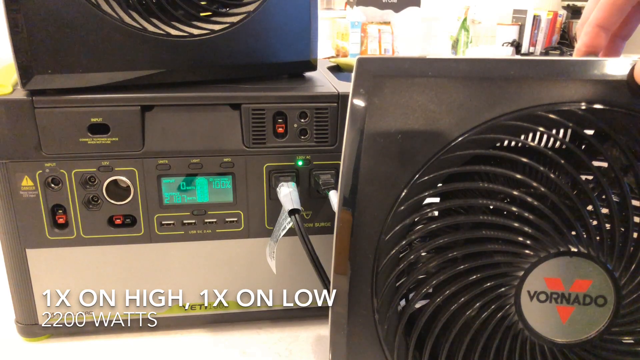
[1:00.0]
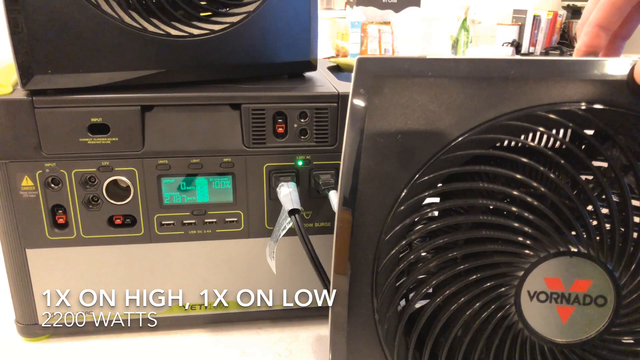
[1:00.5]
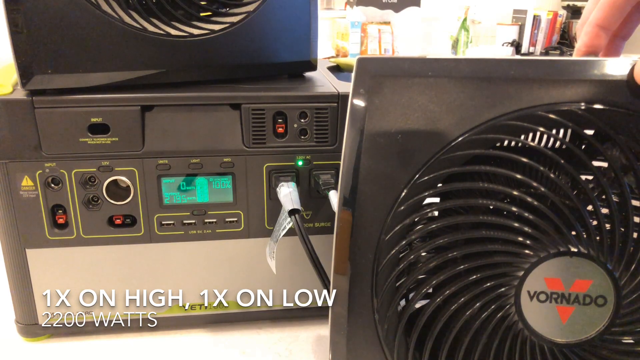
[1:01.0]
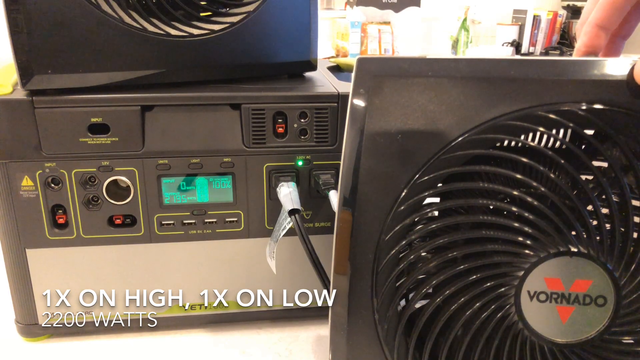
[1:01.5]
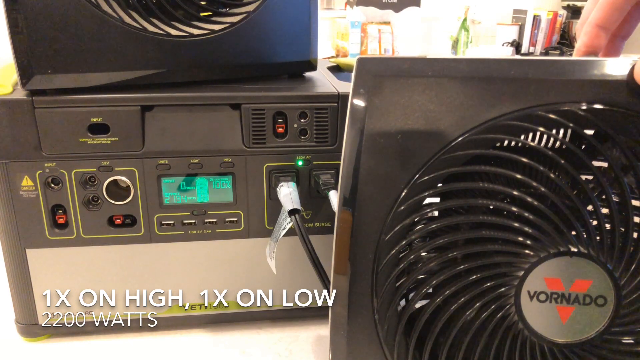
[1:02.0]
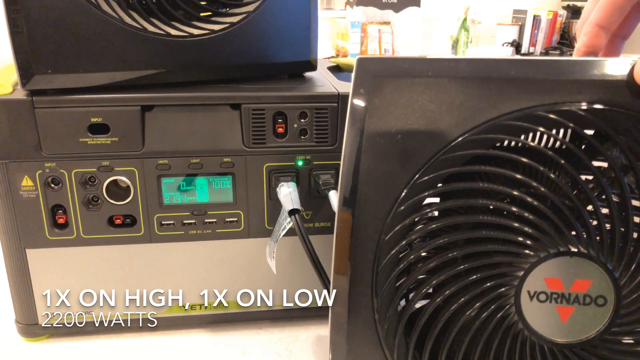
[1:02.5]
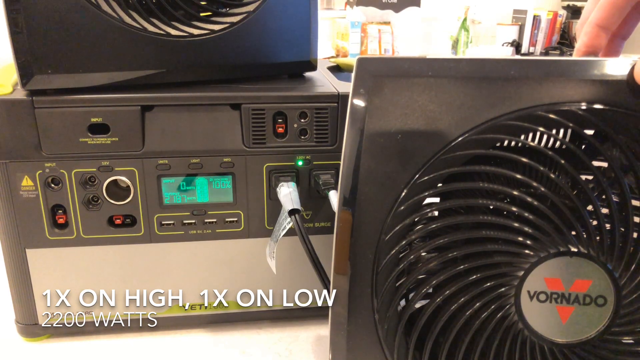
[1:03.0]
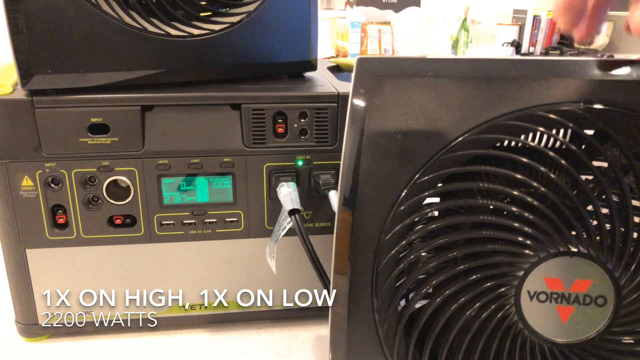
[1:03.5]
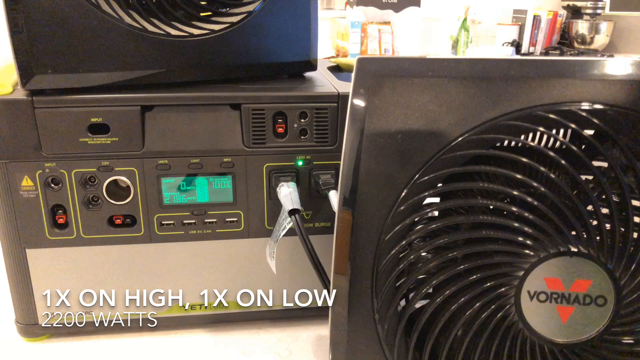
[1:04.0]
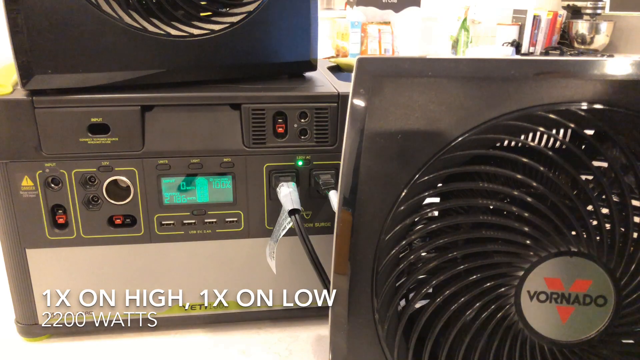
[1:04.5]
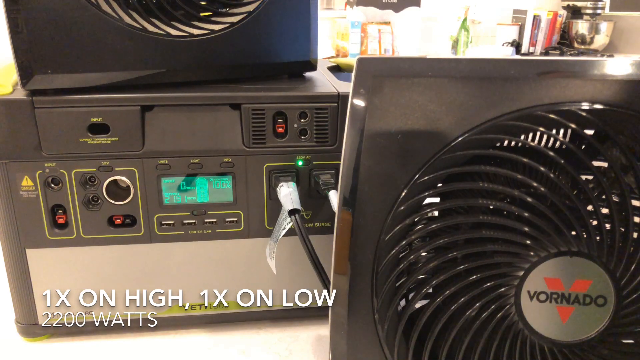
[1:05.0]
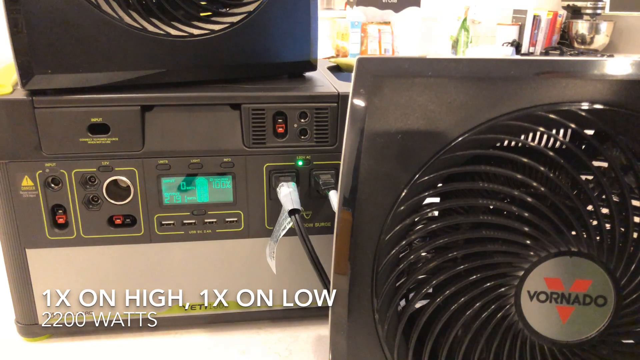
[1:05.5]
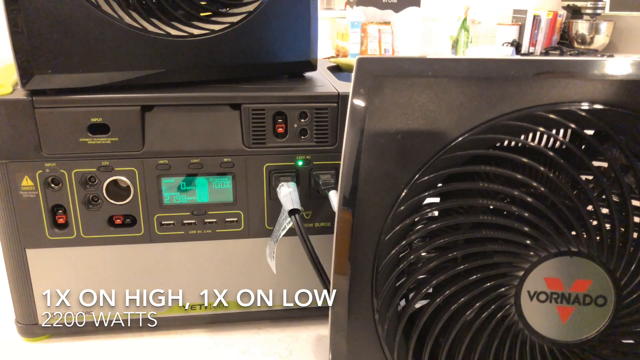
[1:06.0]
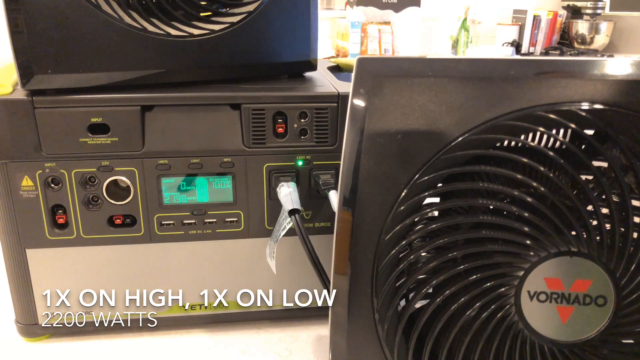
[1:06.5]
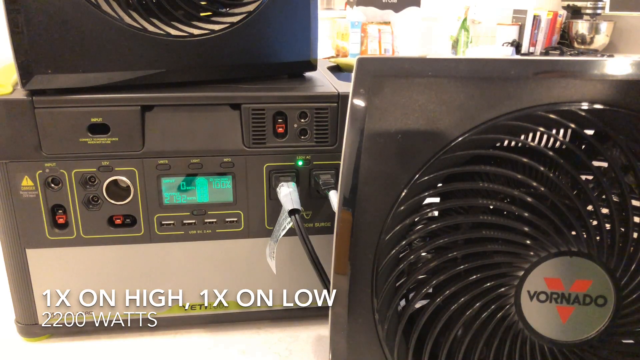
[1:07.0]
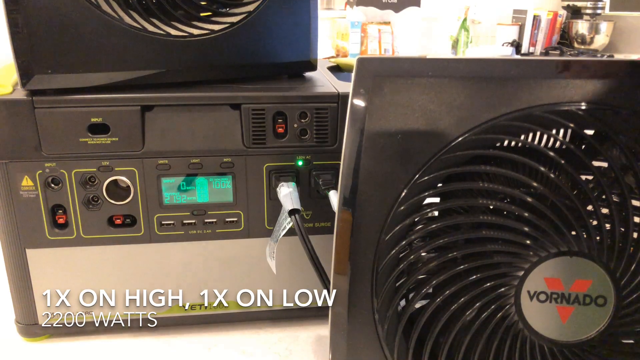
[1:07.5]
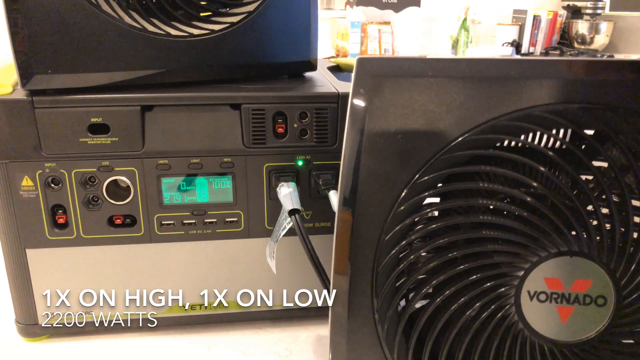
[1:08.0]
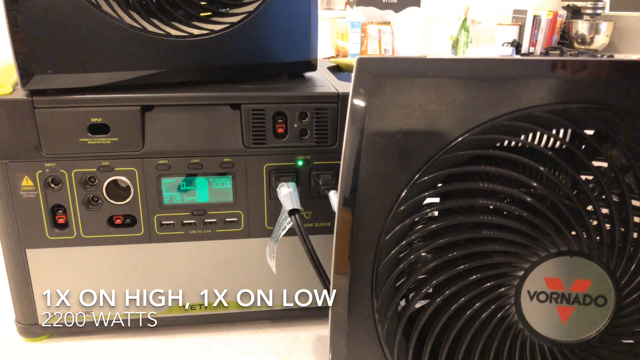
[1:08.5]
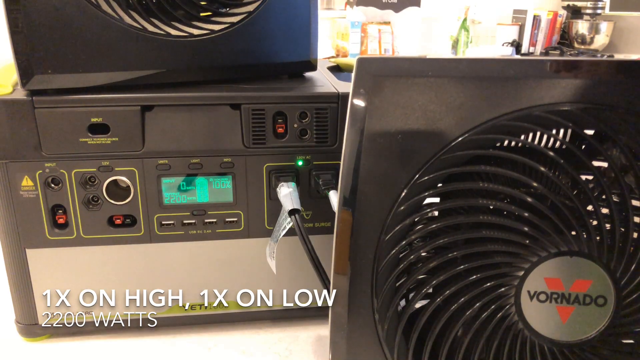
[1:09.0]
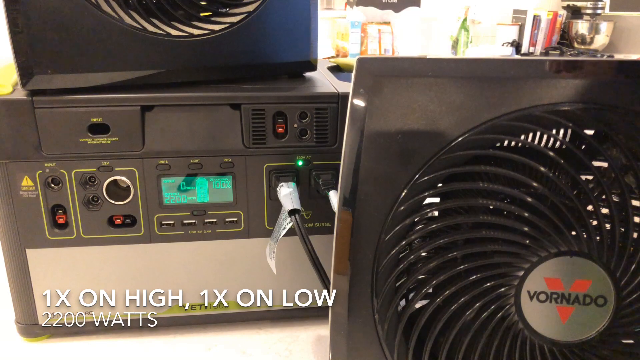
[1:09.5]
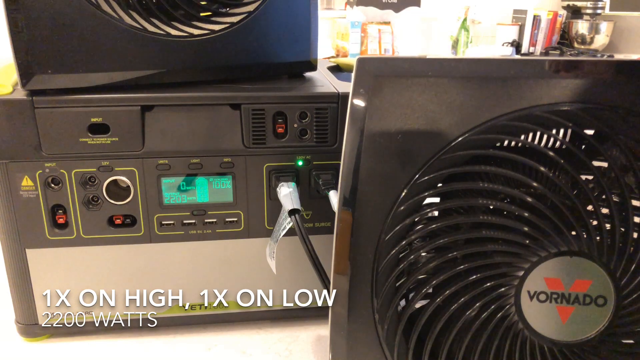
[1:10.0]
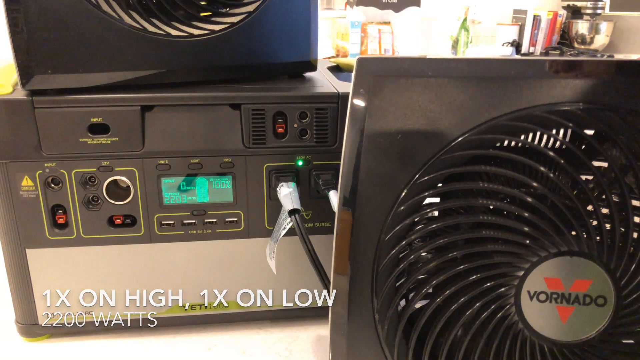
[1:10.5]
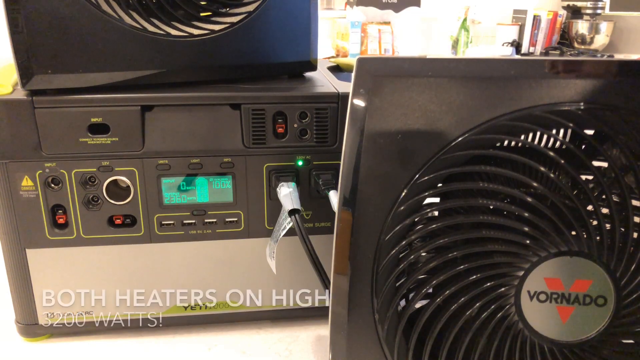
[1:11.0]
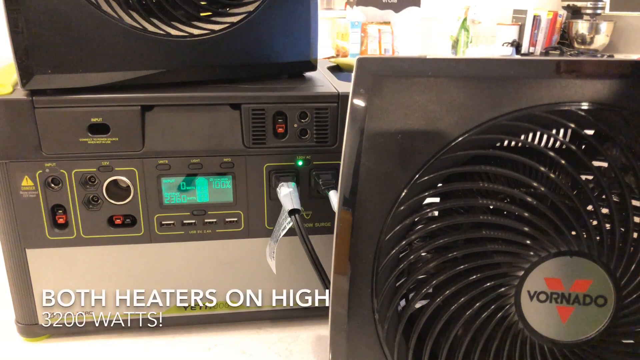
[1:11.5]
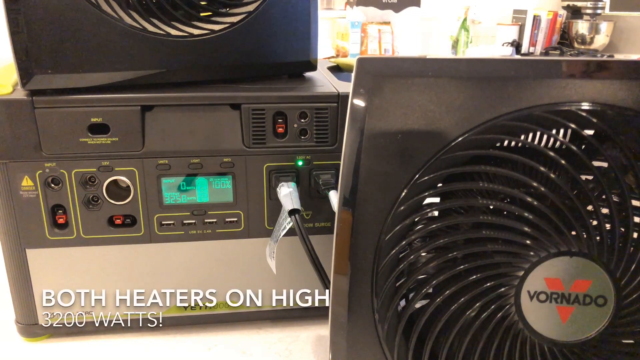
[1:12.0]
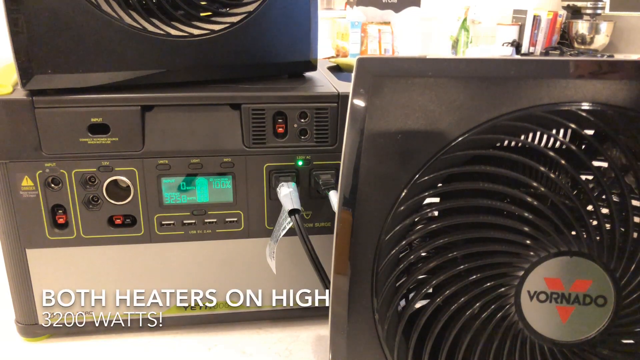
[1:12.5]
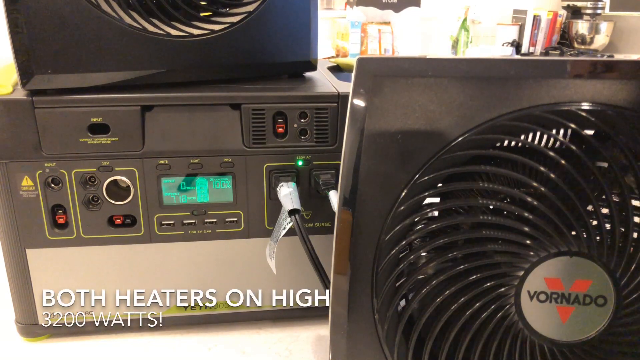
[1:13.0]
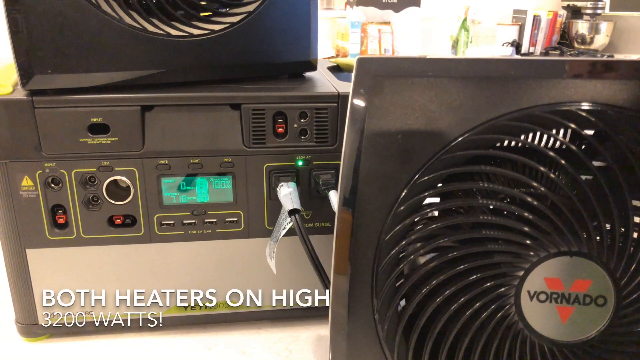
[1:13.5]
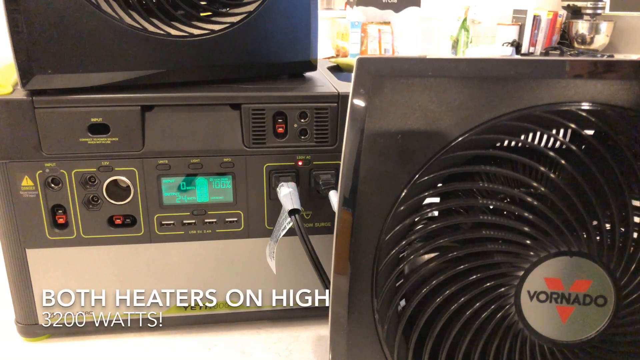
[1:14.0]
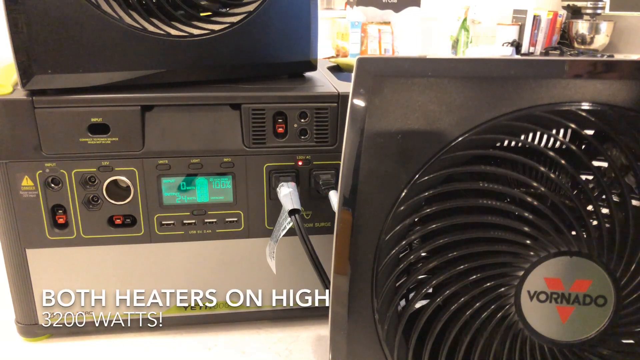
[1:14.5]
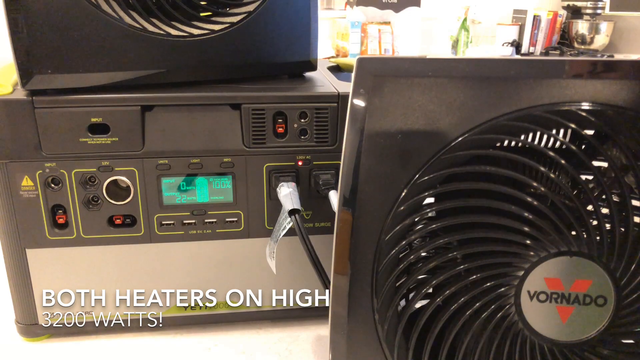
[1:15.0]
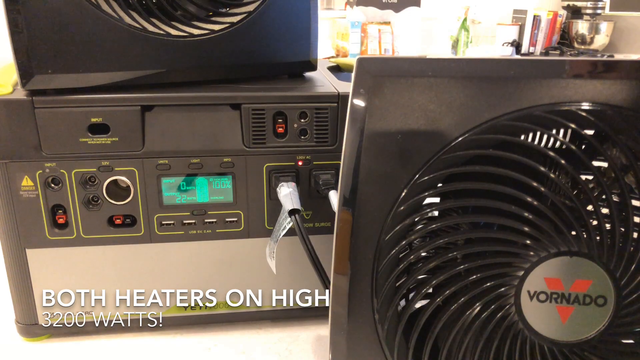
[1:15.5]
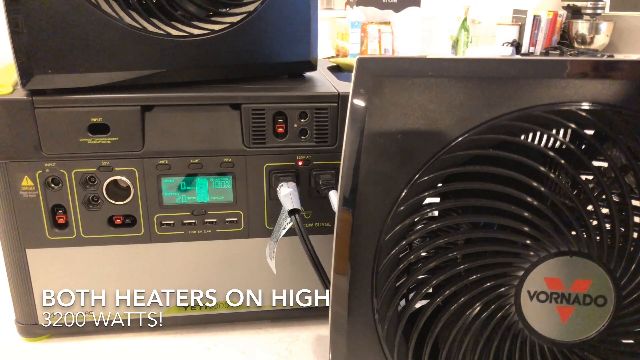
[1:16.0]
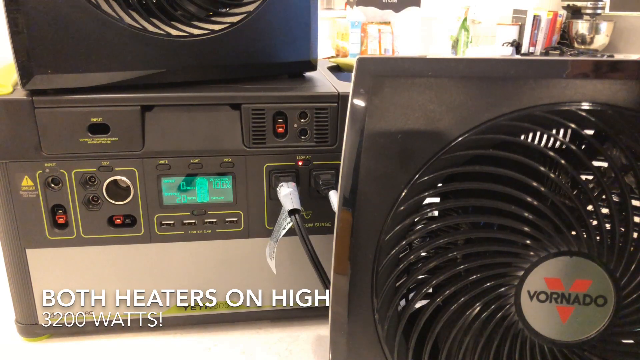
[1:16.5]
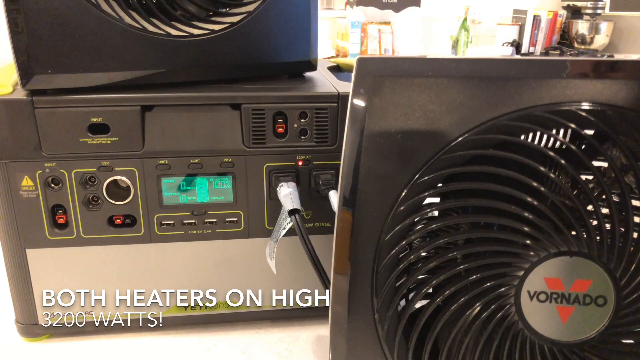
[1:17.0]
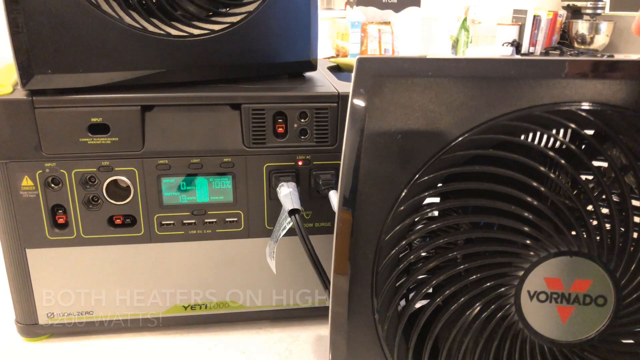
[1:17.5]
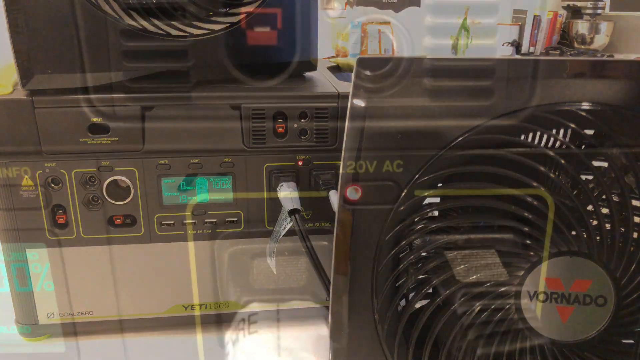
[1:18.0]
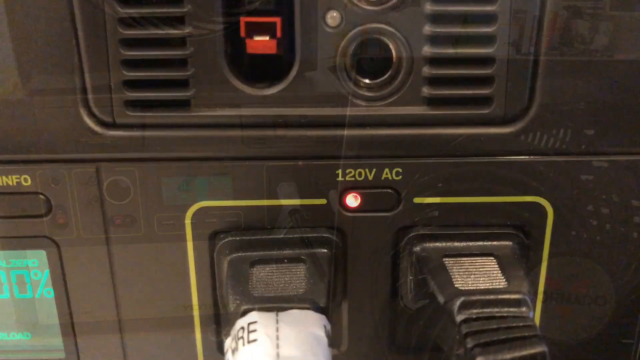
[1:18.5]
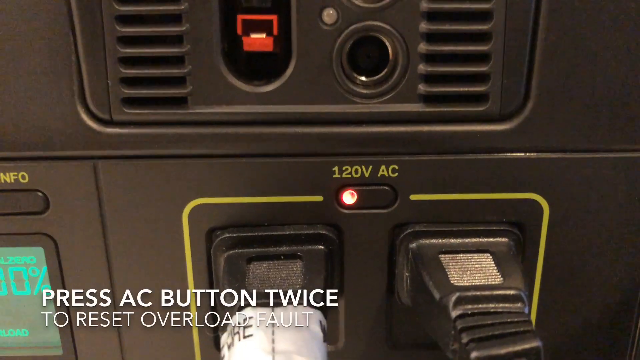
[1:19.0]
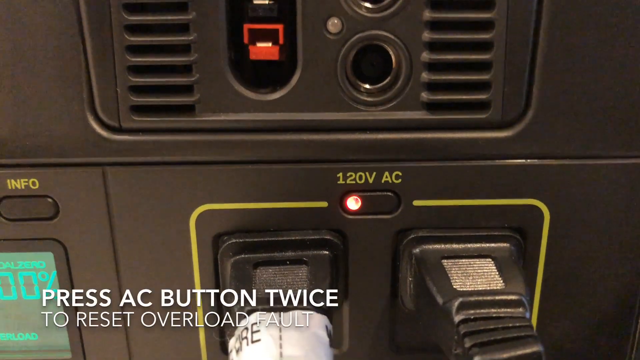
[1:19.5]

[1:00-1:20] Text in the lower corner of the screen reads "one time on high, one time on low", which is 2,200 watts. A Vernado heater stands alone; someone has just turned it on, and it begins to spin and then stops. The back of the receiver is visible, with directions reading "press the AC button once". A right hand touches the top of the Vernado heater. Another Vernado heater is on the receiver, which has a green screen and many outlets. The setup of the heaters and receiver is in somebody's office; over the top of the lone Vernado heater there appears to be a desk with some books on it. The demonstration shows two heaters powered by the one receiver.